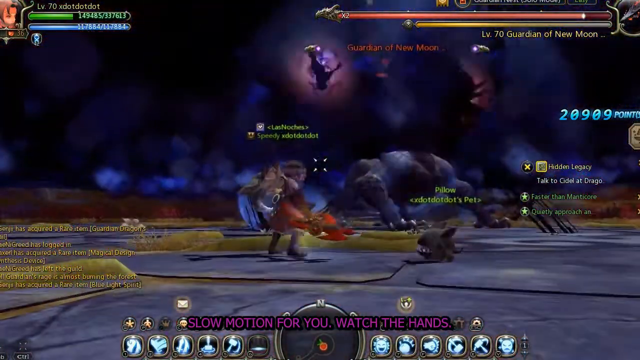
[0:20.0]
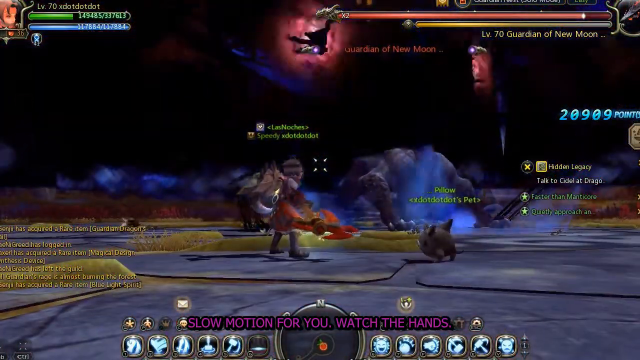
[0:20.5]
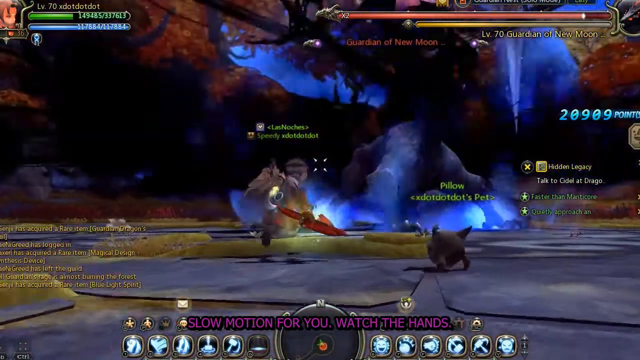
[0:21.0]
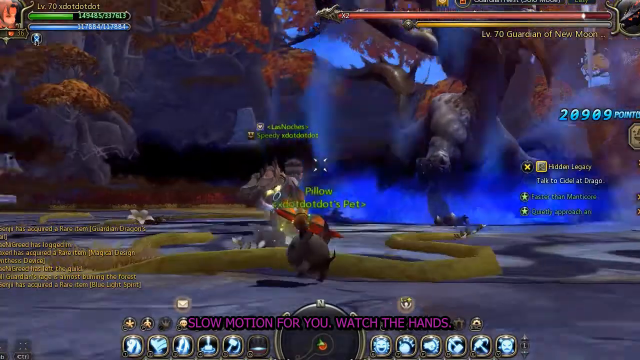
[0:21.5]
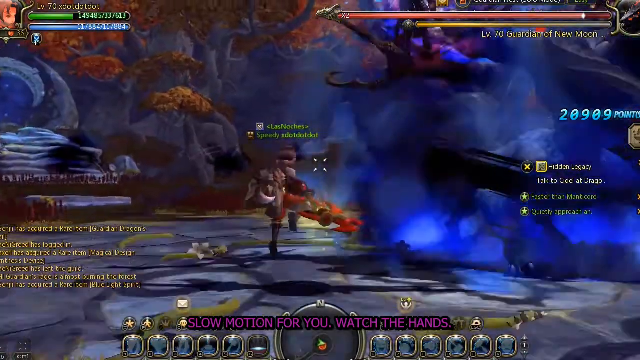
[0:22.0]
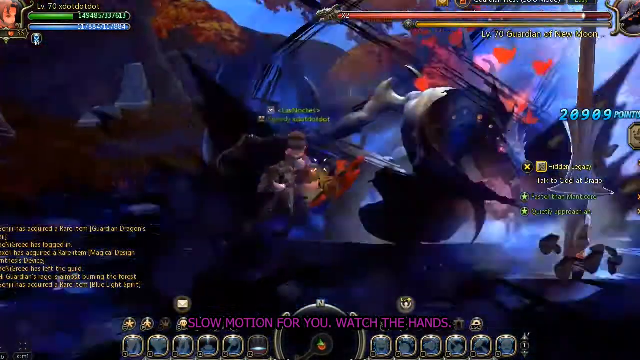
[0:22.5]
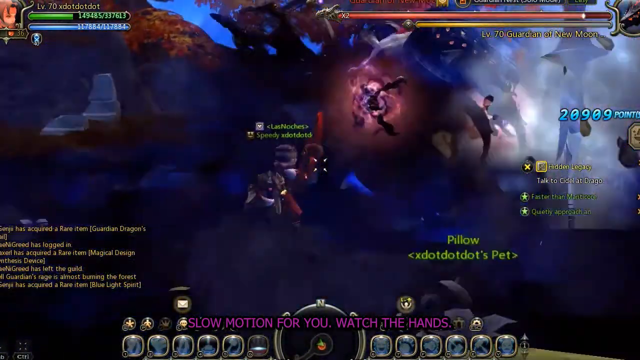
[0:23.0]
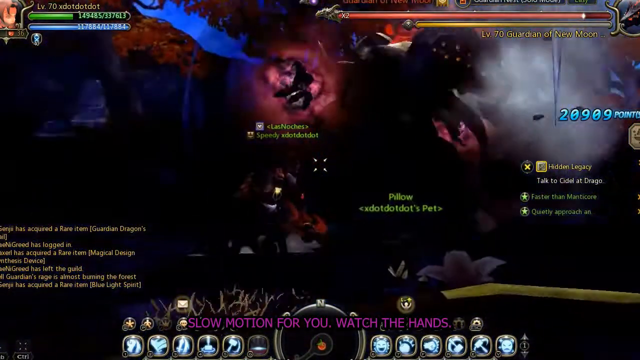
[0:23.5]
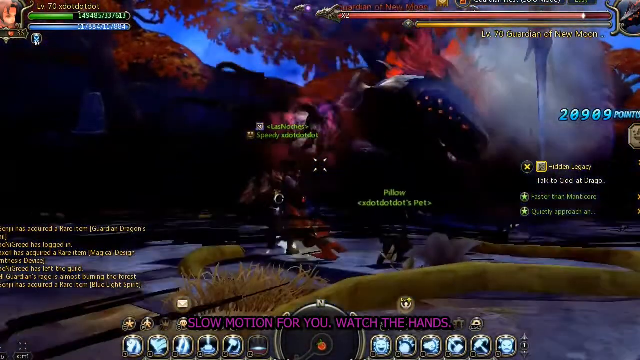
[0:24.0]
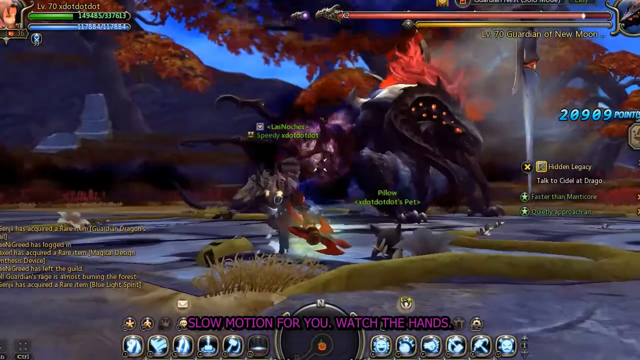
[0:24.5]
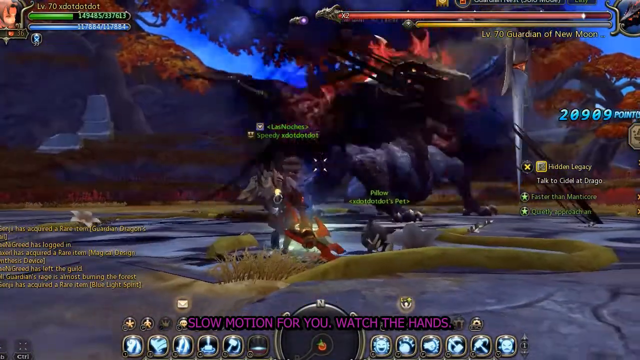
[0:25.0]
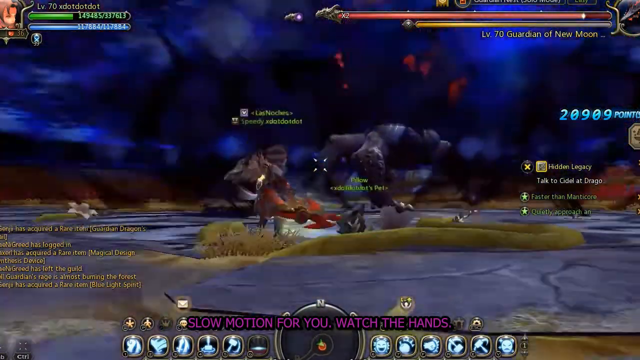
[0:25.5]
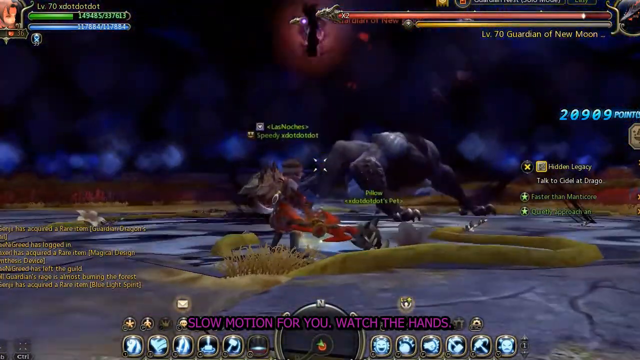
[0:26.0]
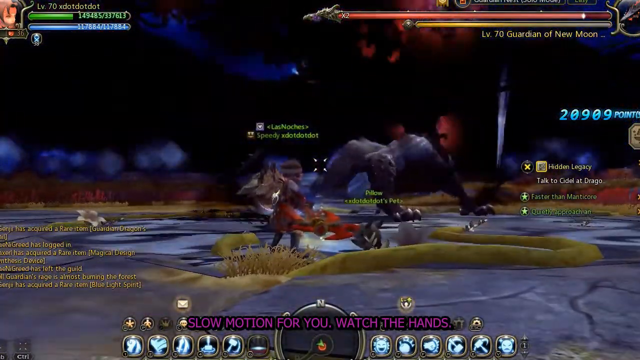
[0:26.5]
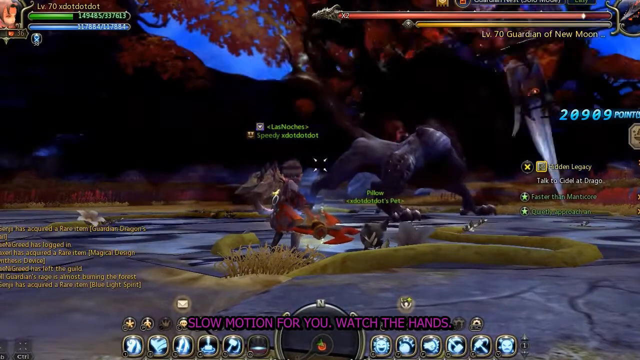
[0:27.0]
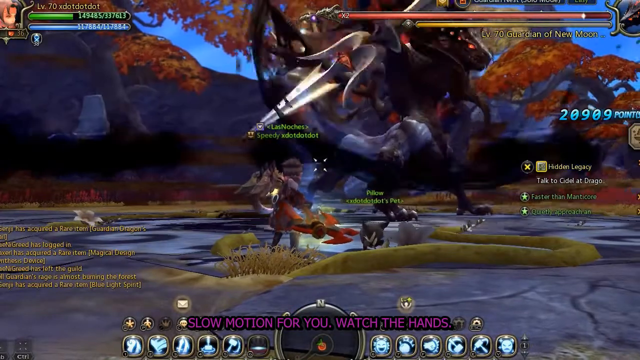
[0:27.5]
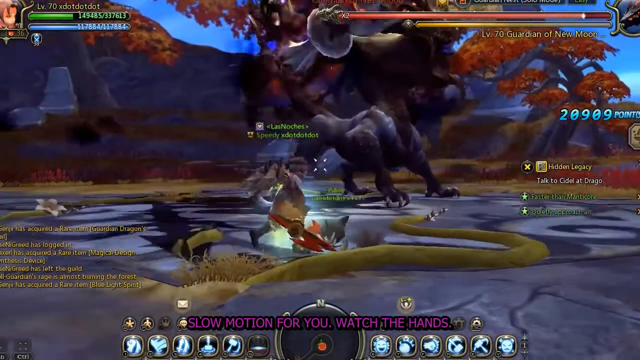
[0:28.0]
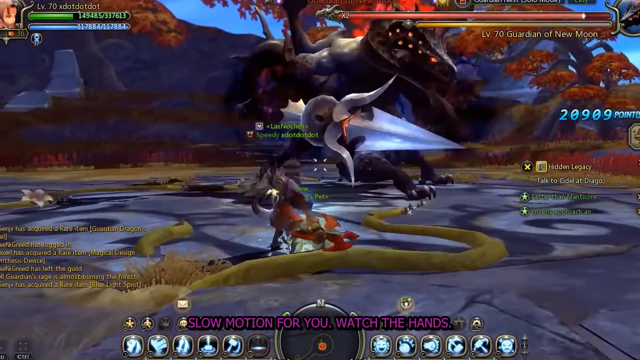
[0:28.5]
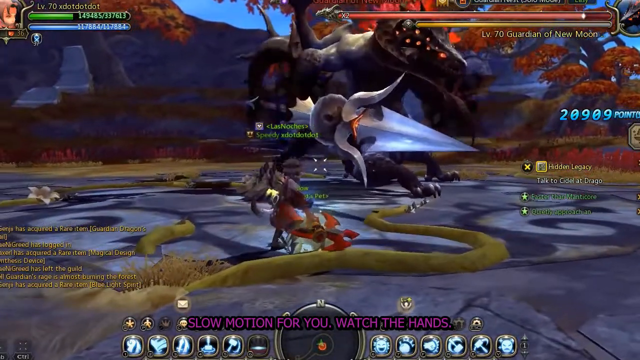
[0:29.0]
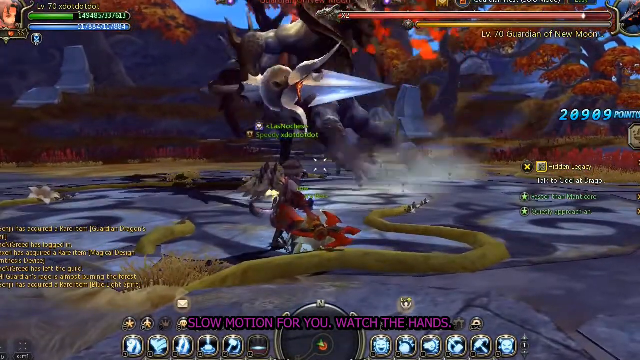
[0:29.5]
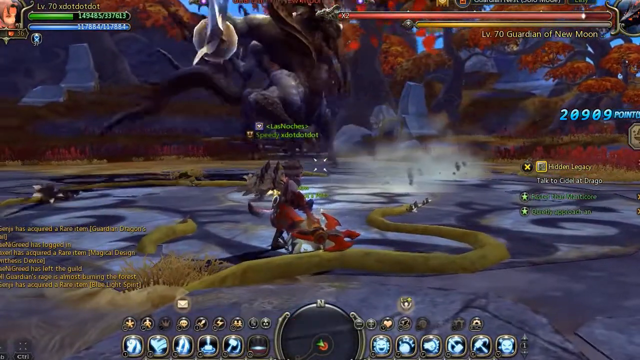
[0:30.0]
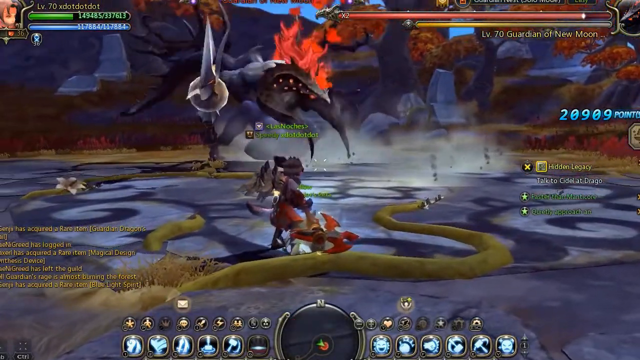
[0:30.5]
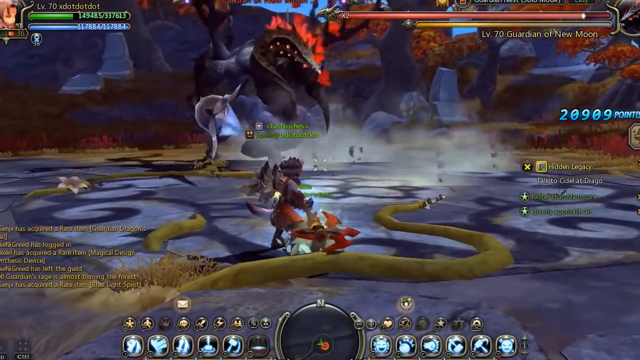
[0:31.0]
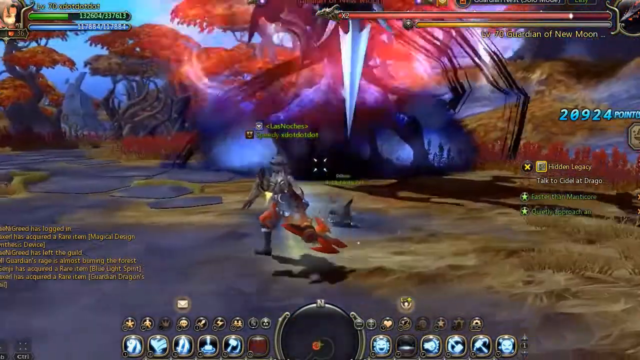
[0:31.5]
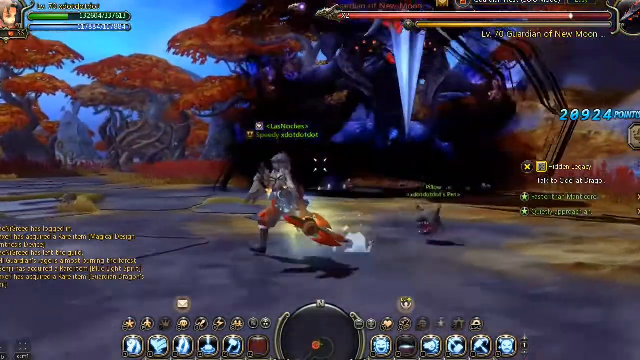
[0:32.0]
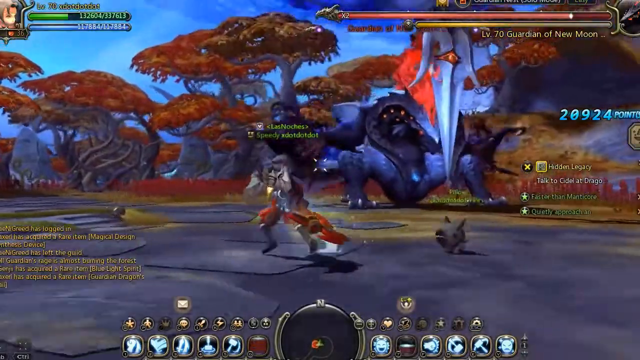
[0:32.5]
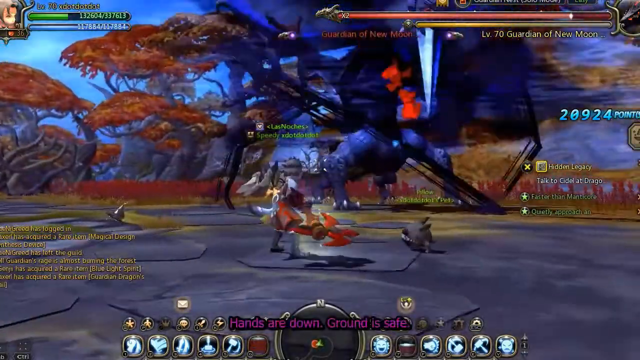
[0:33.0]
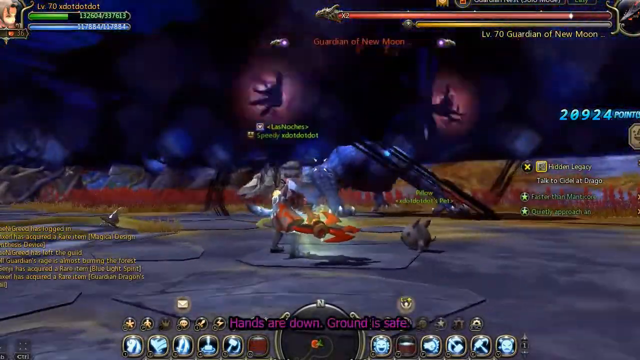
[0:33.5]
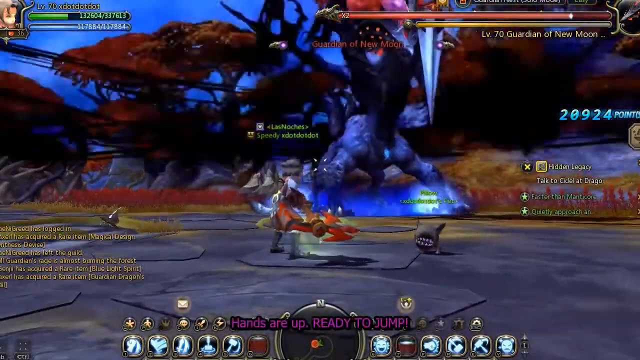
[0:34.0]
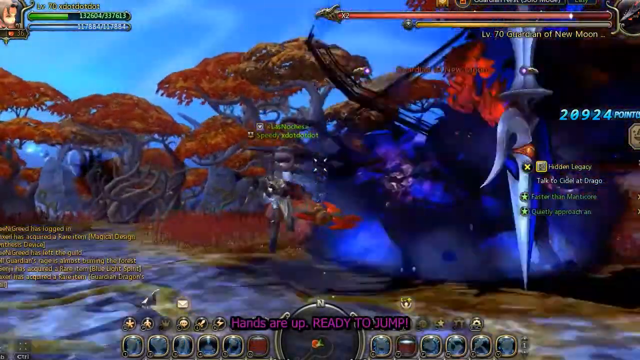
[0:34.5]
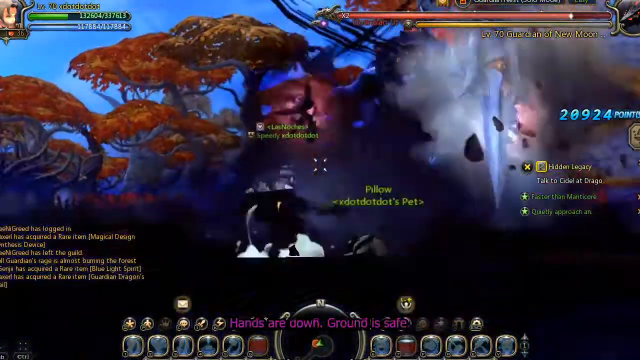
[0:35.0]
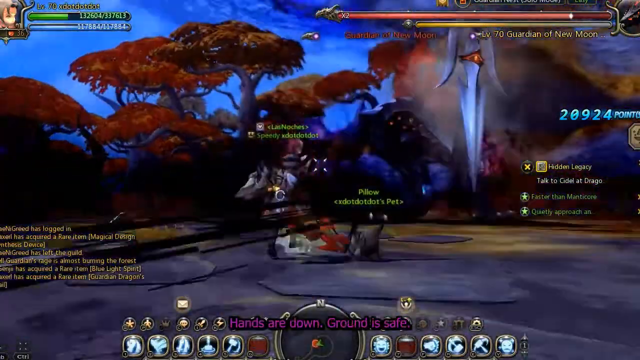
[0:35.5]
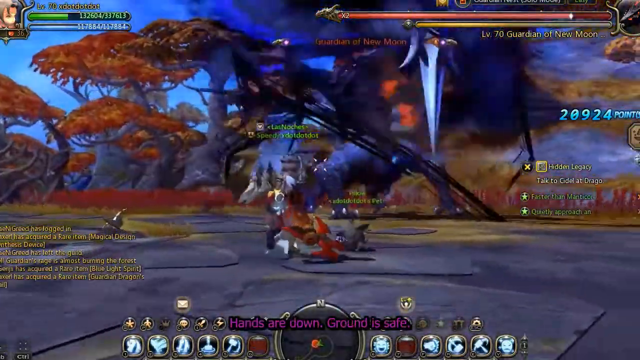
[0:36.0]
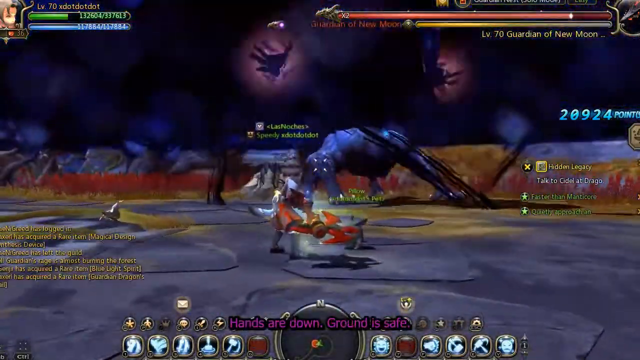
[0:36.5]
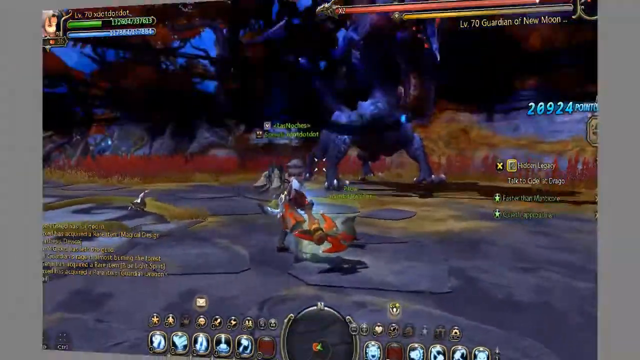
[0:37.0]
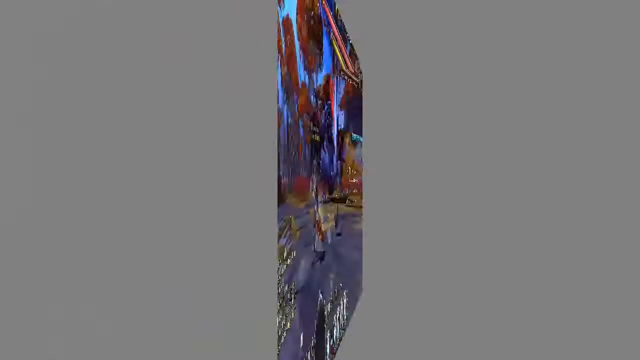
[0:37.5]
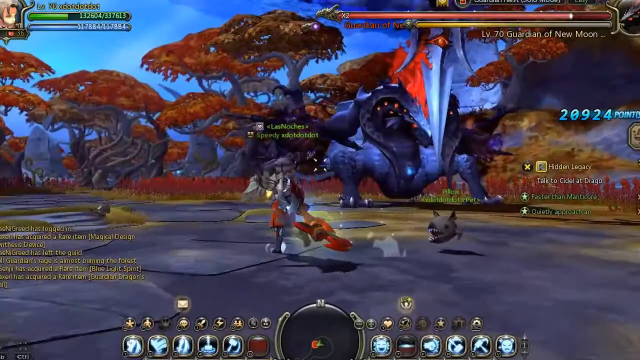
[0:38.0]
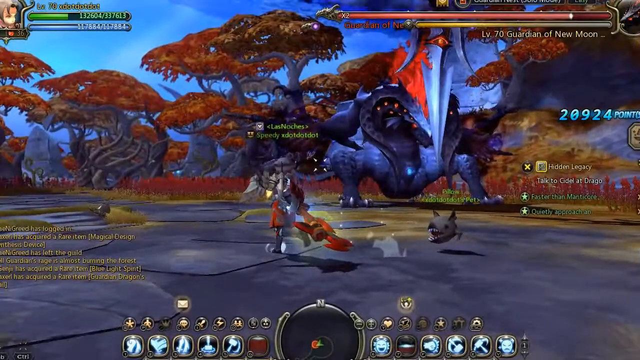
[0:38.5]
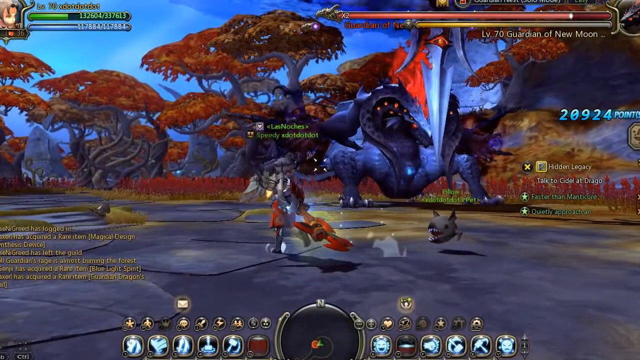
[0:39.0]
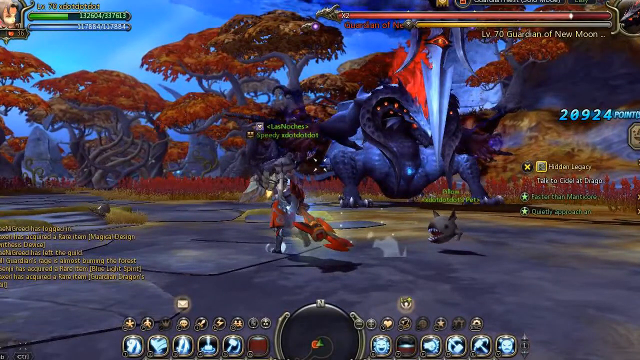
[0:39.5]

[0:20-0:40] The hero keeps battling the dragon among red and orange trees. The scene changes from night to day, and the sky is now light blue. The ground where the fight takes place is covered by rock and is all very flat. The trees have very loose trunks, seem very tall, and look very different from regular trees, apparently not meant to represent real ones. The dragon is sort of jumping around and flailing his dagger. Words on the screen read "Guardian of New Moon, Pillow, Hidden Legacy, Level 70, Guardian of New Moon", and on the left-hand side there are apparently points relating to whom the player is battling. The look is medieval-like, and the trees look fantastical rather than natural.